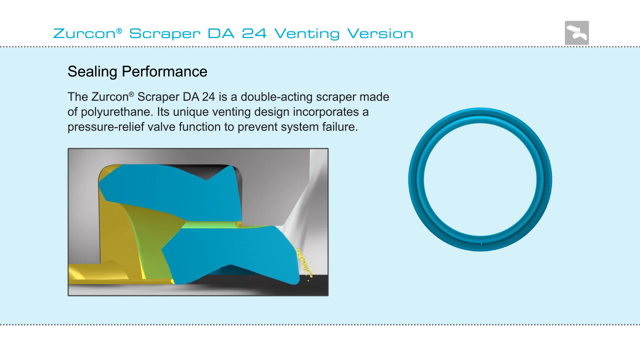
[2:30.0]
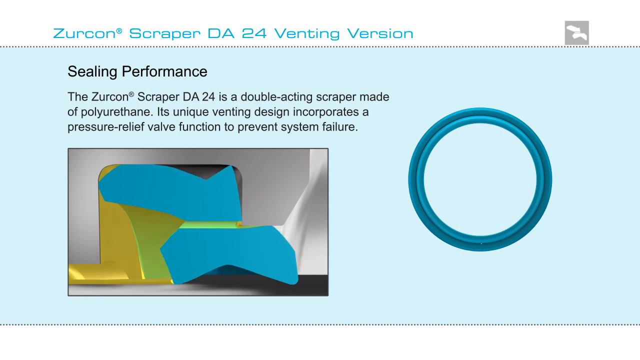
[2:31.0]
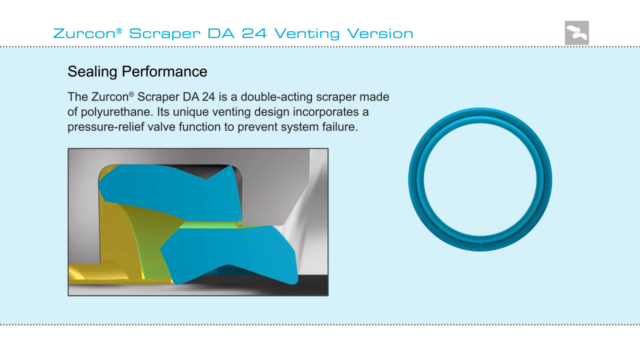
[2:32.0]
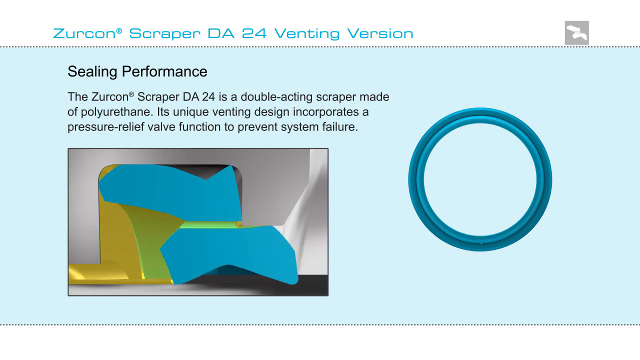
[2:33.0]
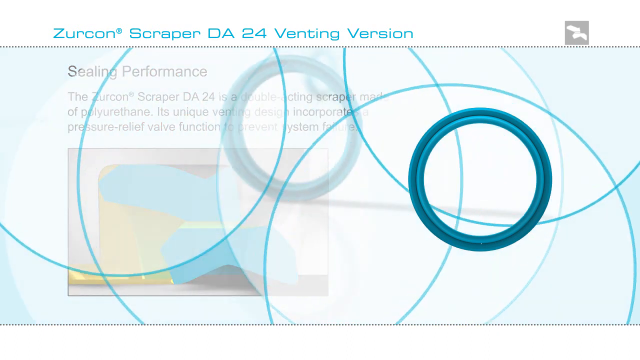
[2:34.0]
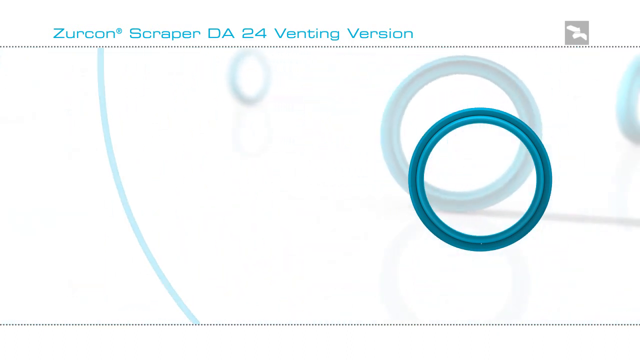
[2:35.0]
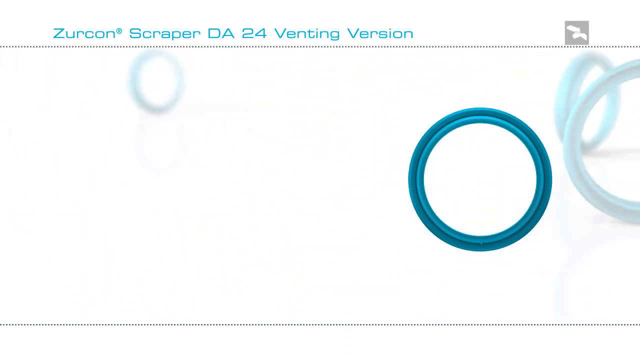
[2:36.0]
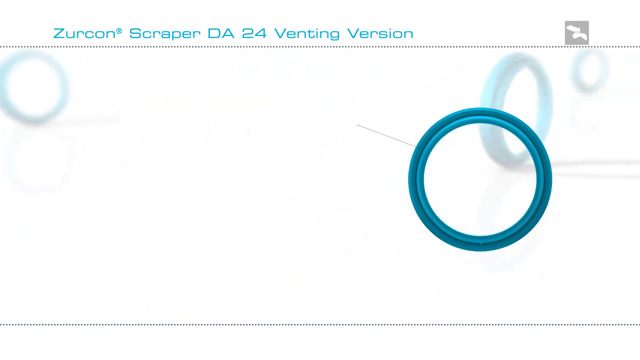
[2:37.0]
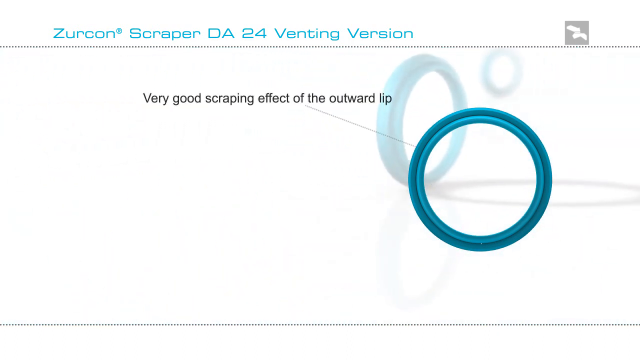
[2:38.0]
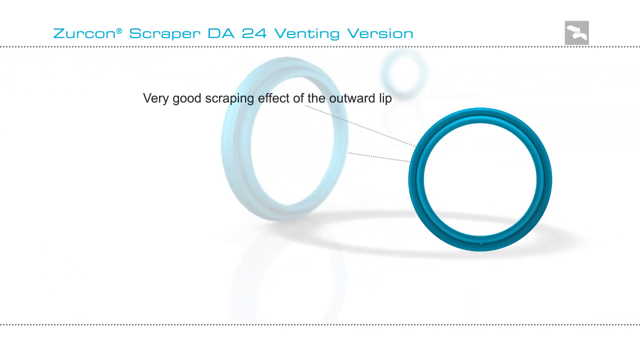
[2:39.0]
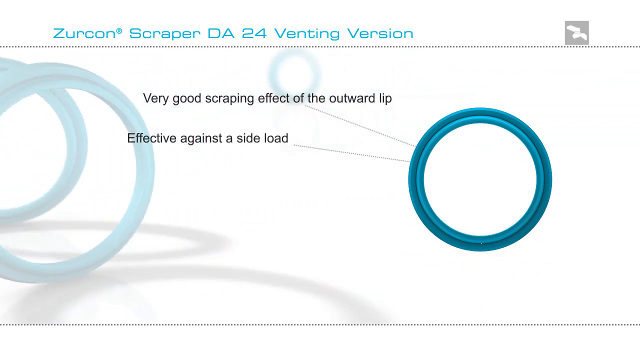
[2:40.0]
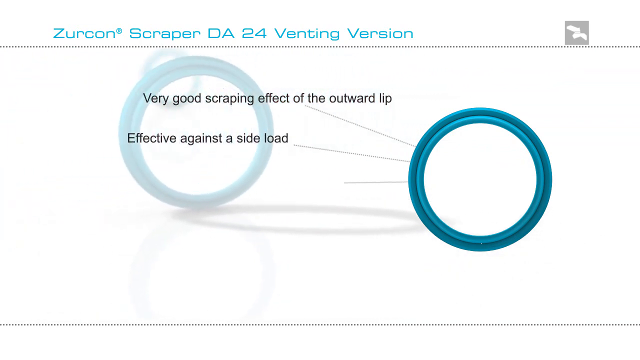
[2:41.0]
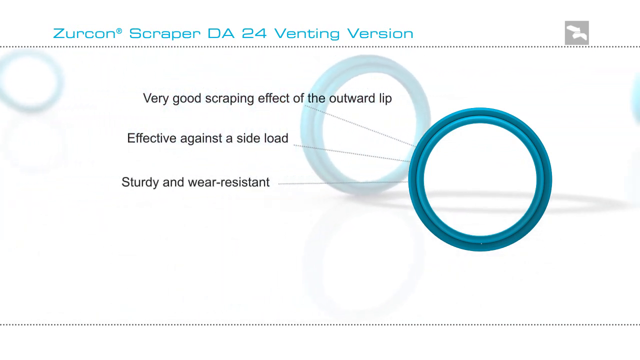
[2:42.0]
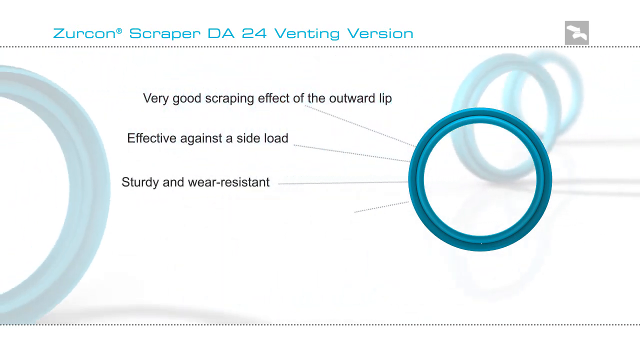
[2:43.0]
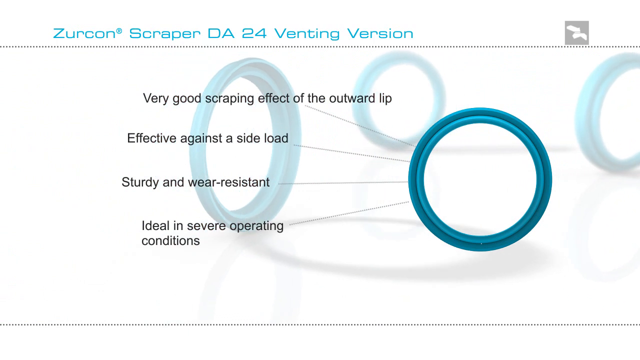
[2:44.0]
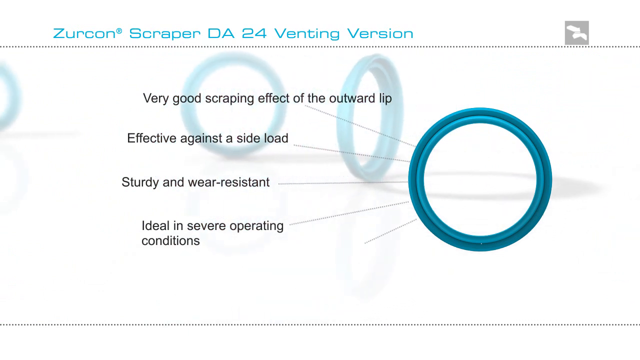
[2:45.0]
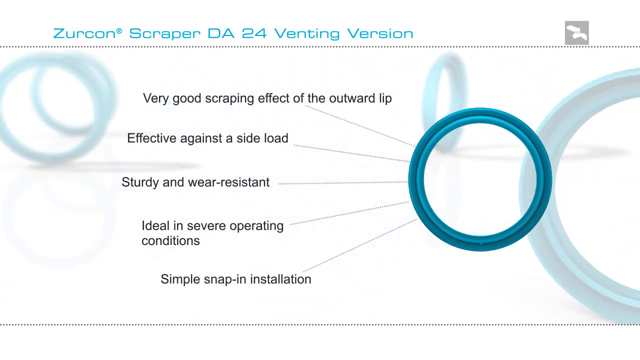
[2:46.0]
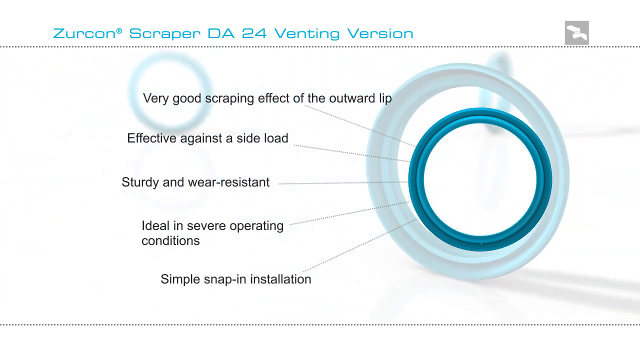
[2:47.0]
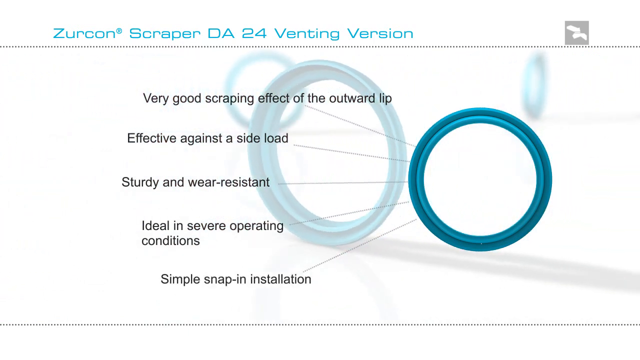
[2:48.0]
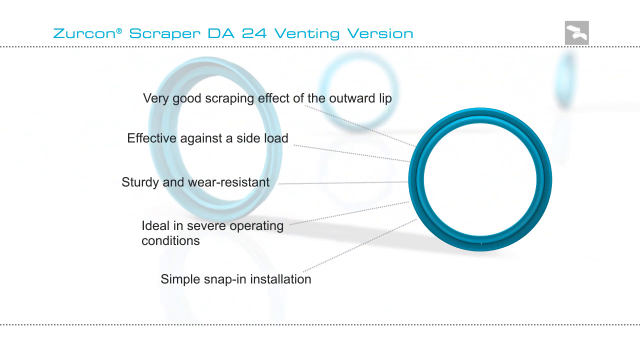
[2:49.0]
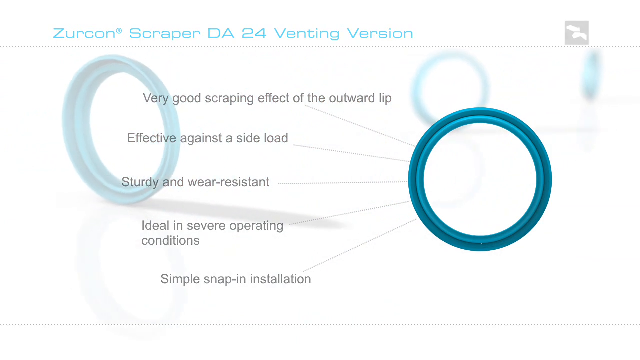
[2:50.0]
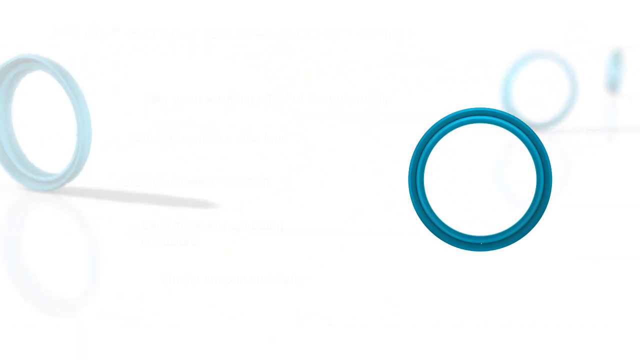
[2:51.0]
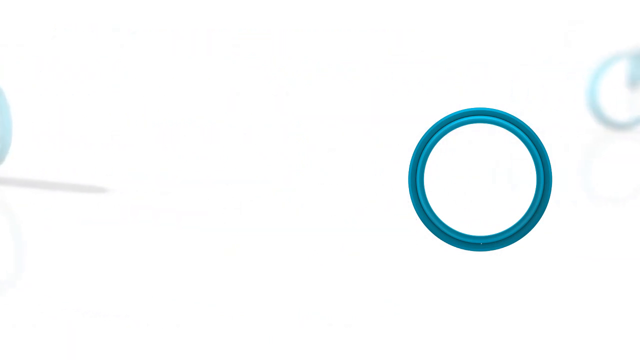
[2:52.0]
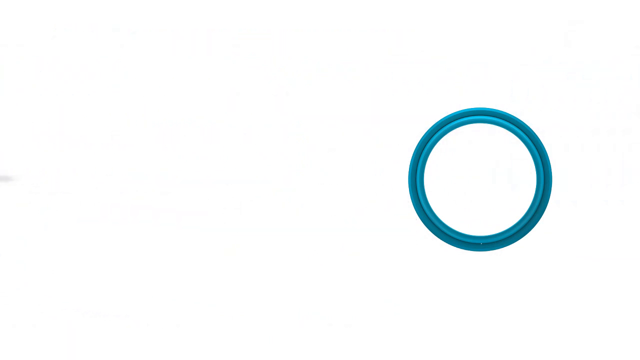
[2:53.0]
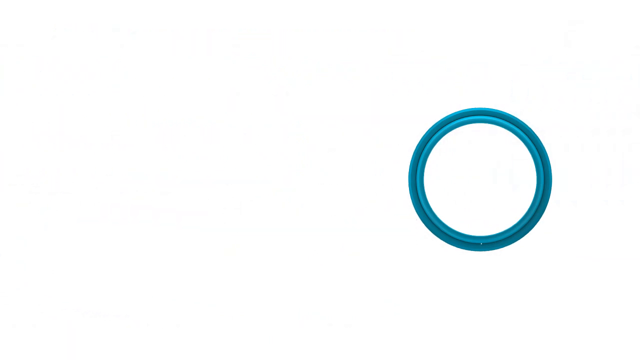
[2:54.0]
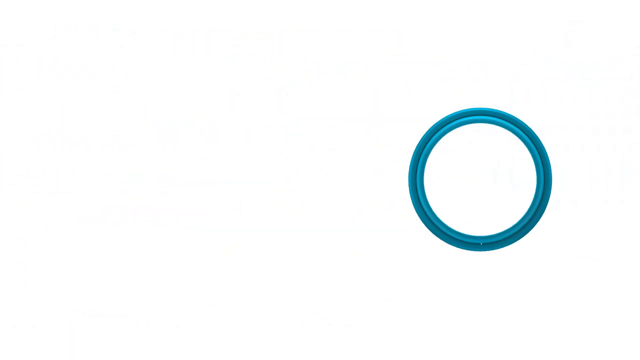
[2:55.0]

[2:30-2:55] A slide has light blue text reading "Zircon Scraper DA24 venting version", and underneath, black text with a header reading "sealing performance", followed by a paragraph and an image of a part with silver, blue, green, and yellow colors. On the right side is a blue circle. The video cuts to another slide showing a blue circle, with a bunch of other circles in the background that have a white coating but can still be seen rolling. Lines point to the circle in the forefront, with black text reading "very good scraping effect of the outward lip", then "effective against the side load", "sturdy and wear resistant", "ideal in severe operating conditions", and "simple snap-in installation".